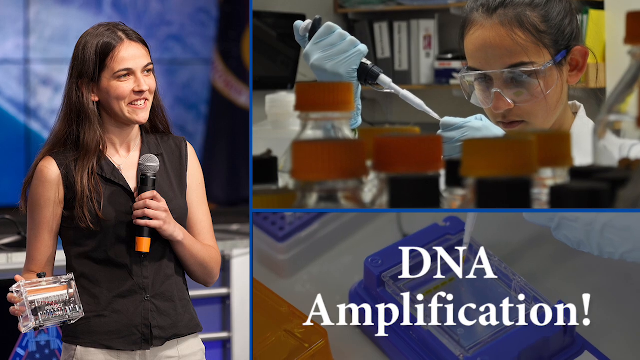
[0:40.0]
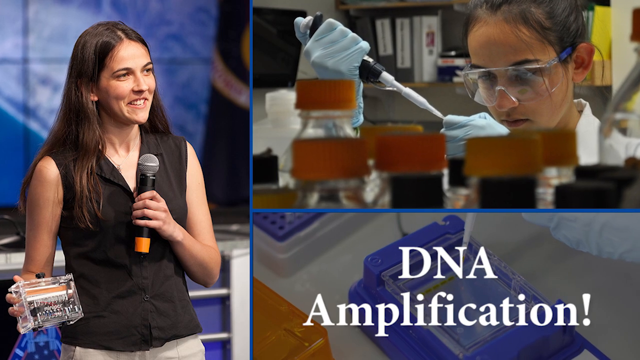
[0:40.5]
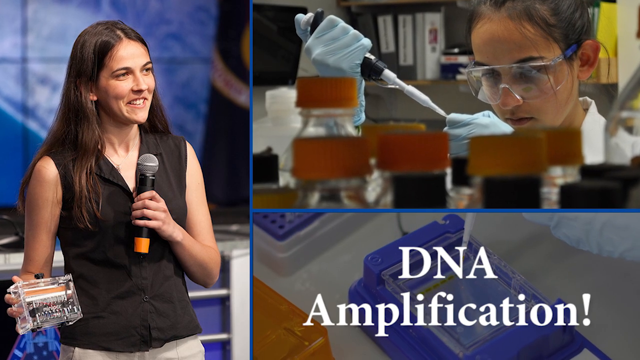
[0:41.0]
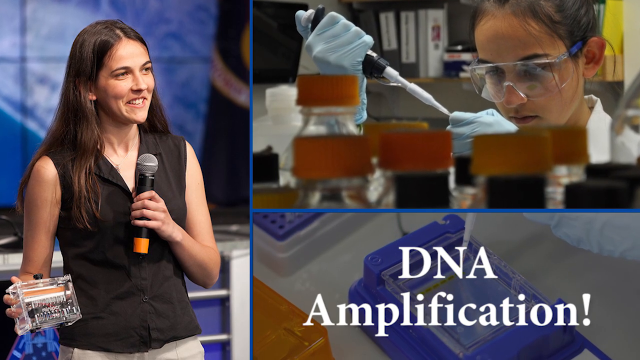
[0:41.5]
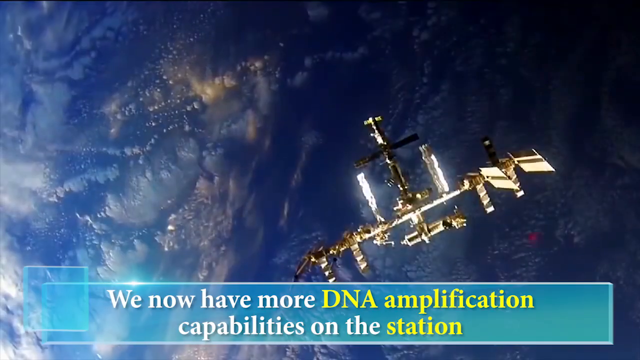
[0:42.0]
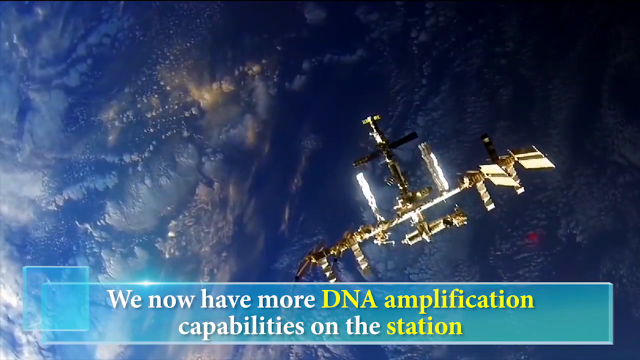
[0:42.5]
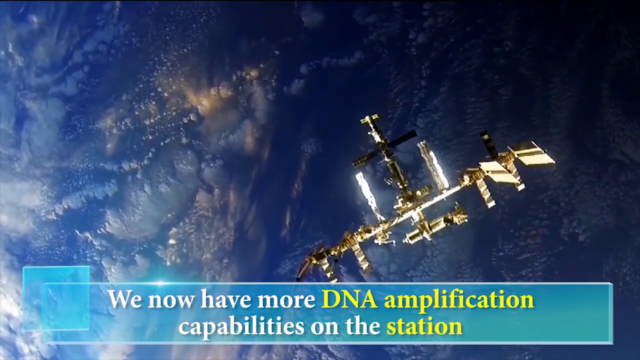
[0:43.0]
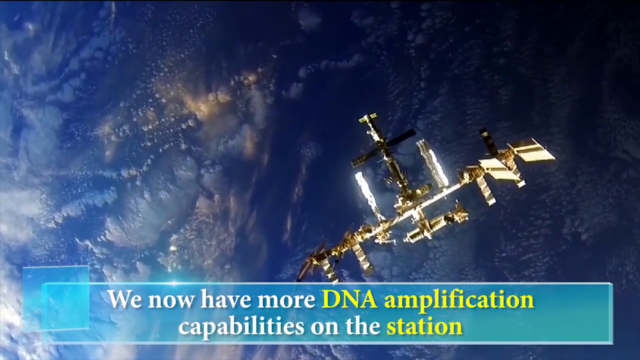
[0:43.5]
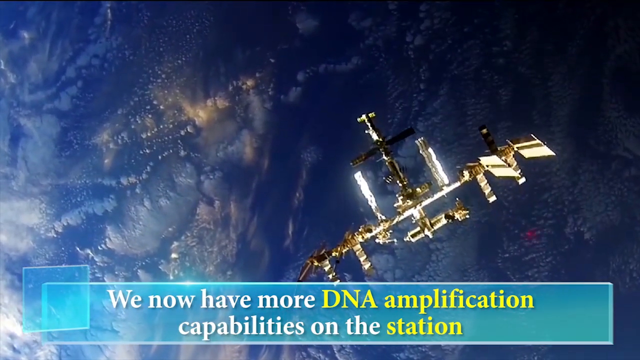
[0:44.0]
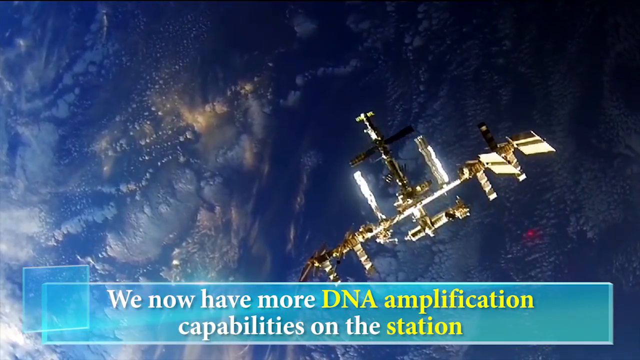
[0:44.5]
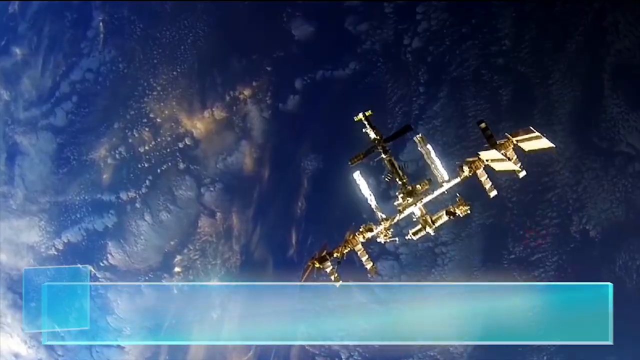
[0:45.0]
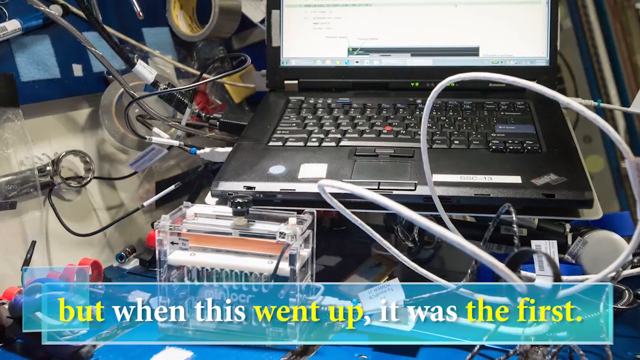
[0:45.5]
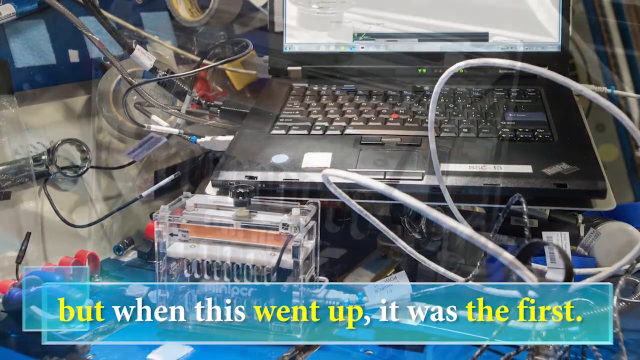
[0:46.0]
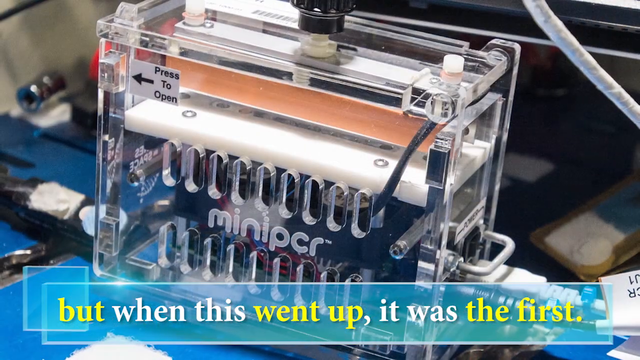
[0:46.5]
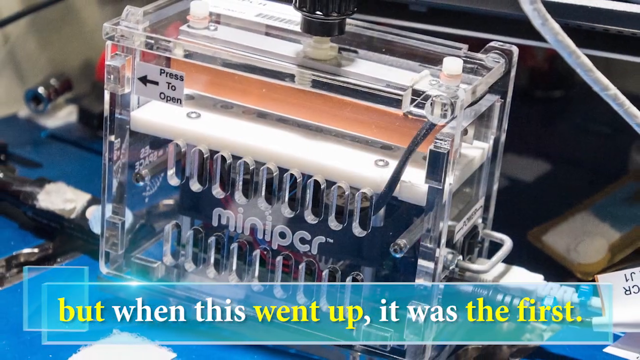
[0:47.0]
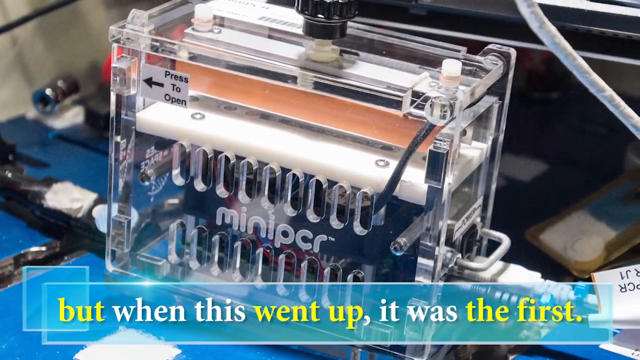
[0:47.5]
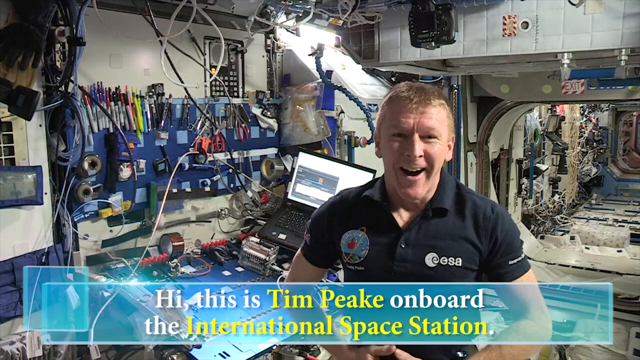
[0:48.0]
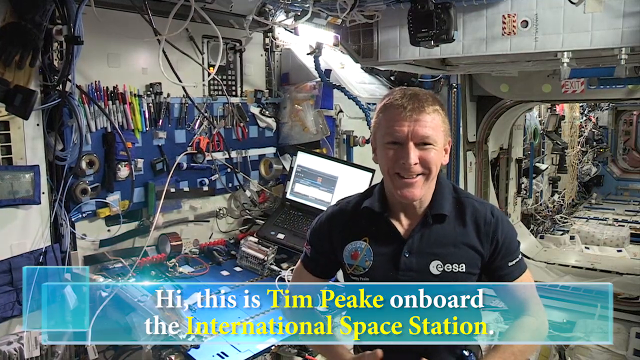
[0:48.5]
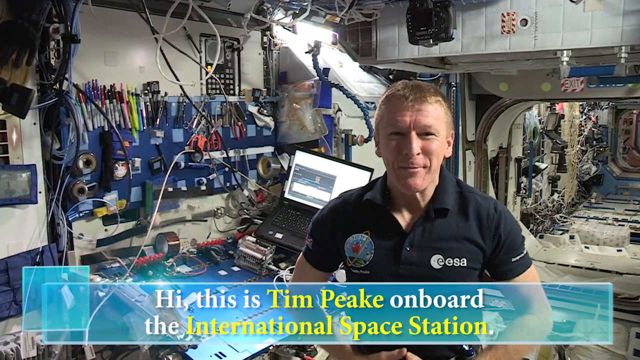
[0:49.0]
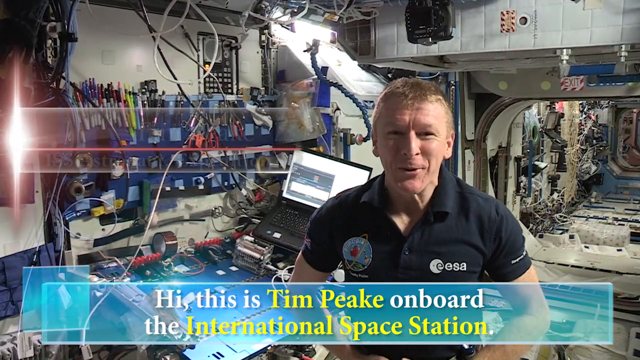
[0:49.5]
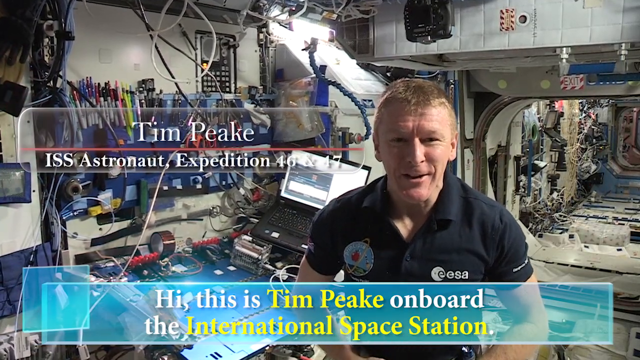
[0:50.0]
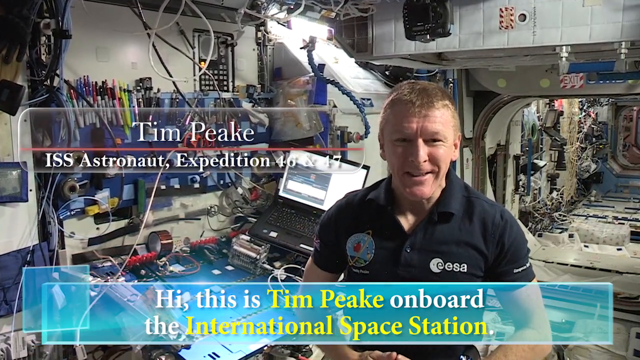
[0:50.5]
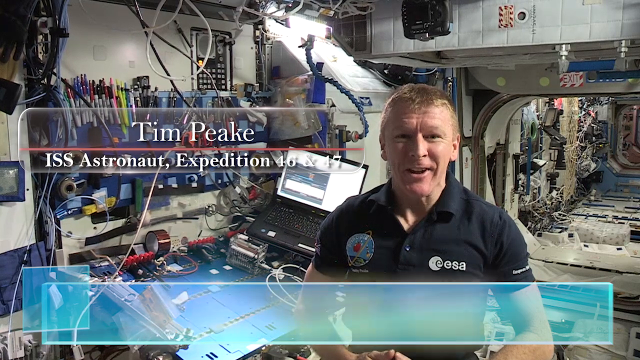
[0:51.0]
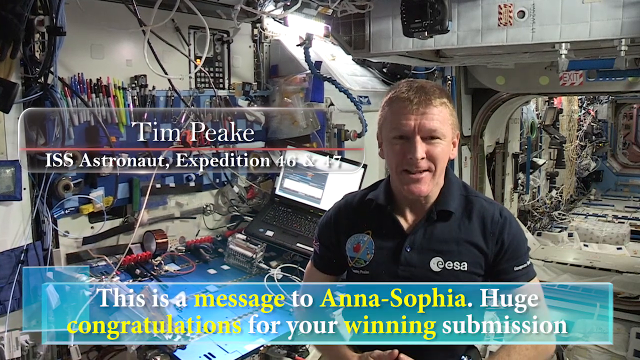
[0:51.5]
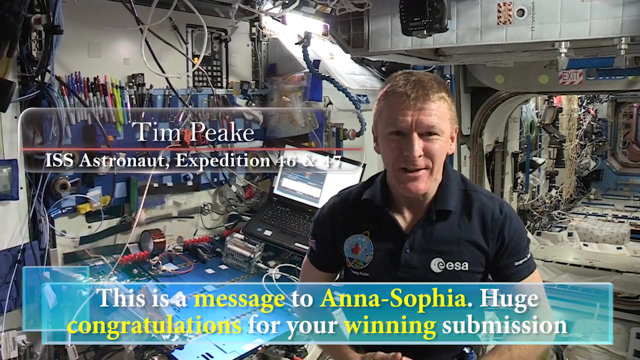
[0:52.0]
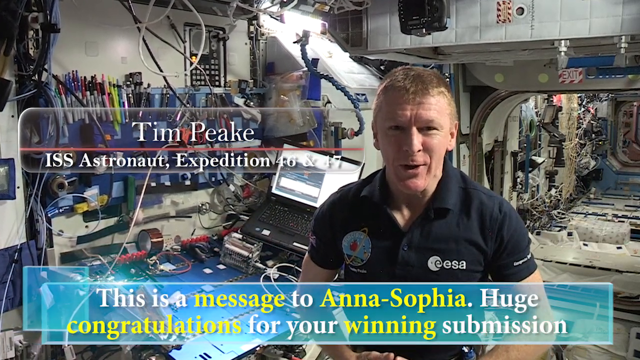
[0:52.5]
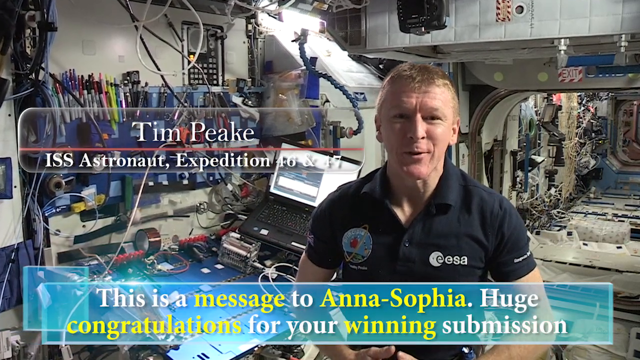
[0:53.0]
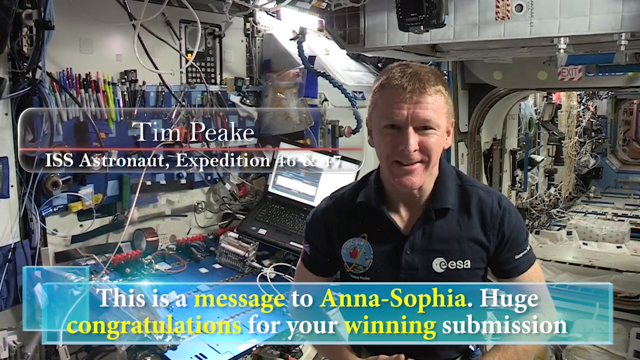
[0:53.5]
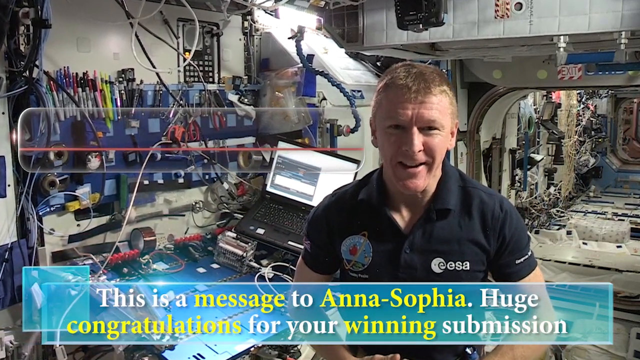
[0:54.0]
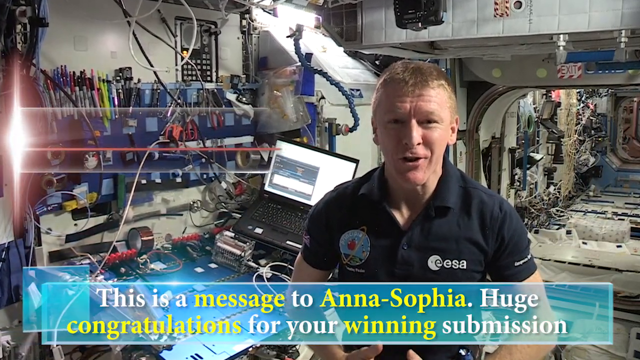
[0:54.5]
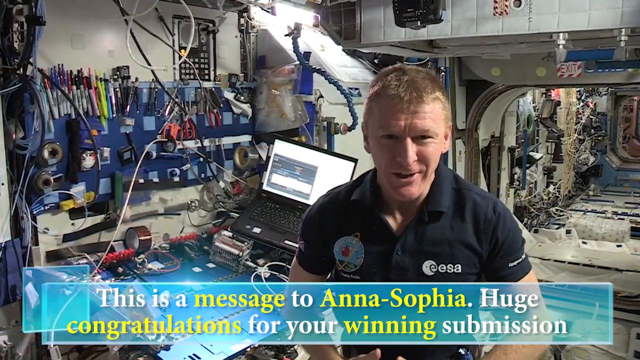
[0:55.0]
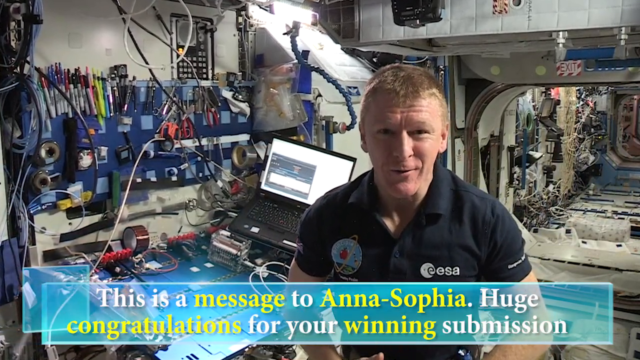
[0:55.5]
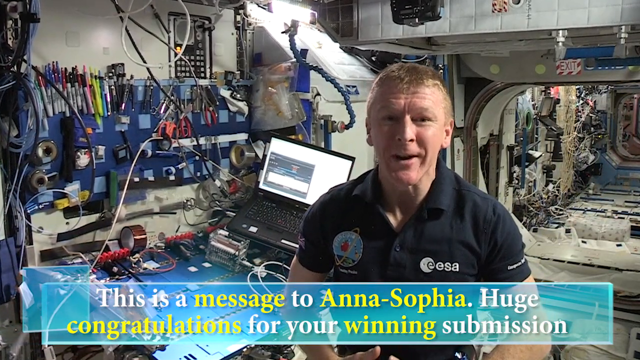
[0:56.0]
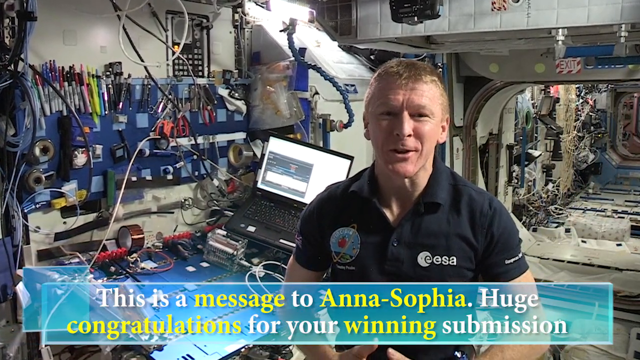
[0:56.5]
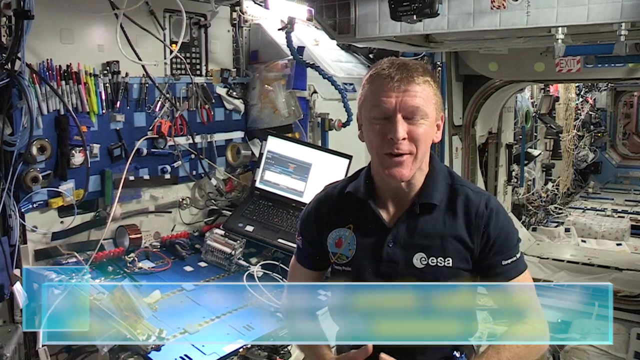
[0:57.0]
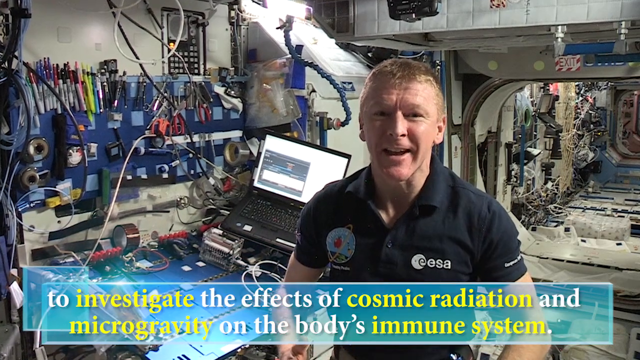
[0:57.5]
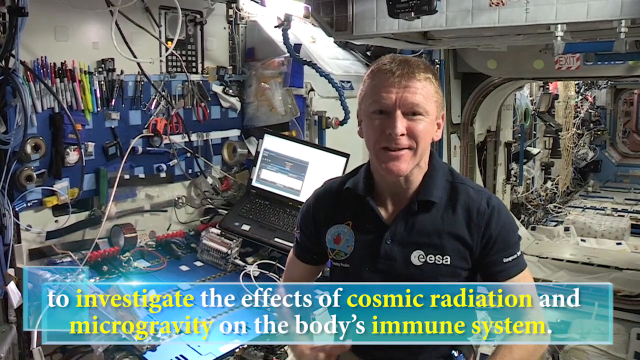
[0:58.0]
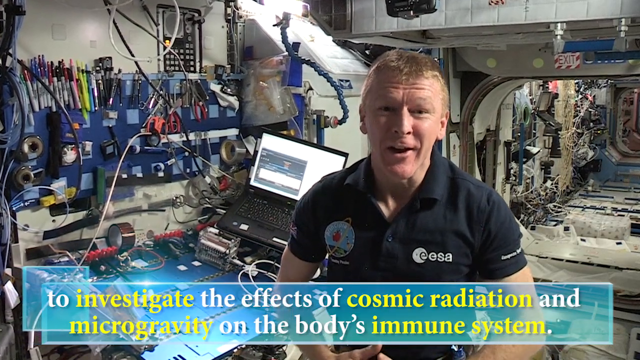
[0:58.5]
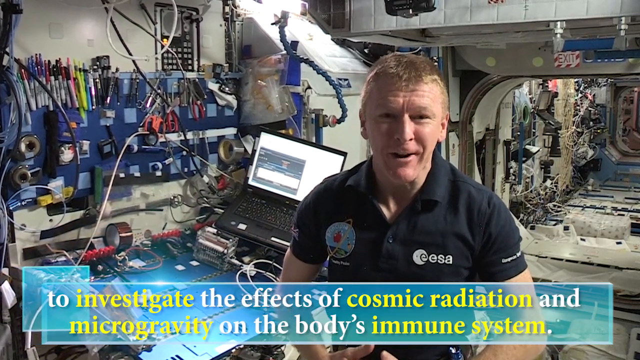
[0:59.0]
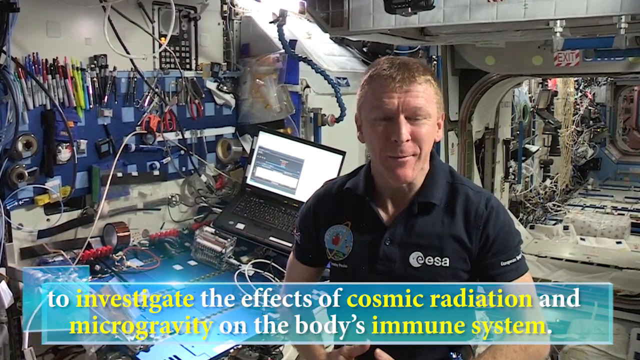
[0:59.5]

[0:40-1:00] A woman with long brown hair in a black shirt holds an object and a microphone in her hands and smiles. Another woman on the right side holds lab equipment, like a vial with little bottles that have orange lids, wears glasses, and is kind of picking at the tip of it; the two are separated by a blue border. Bolded white text reads "DNA amplification," and the camera is kind of zooming in. Then a thing in space moves around, with a blue box at the bottom carrying white and yellow text: "we now have more DNA amplification capabilities on the station but when this went up it was the first." A device called mini PCR appears, with a white sticker bearing black text reading "press to open." A man in a black shirt, who looks like he is from NASA, is shown with a lot of technical equipment in the background and a blue banner with white and yellow text reading "hi this is Tim Peake on board the International Space Station." A banner pops up with his information, reading "Tim Peake ISS Astronaut Expedition 46," followed by more text: "this is a message to Anna Sophia. Huge congratulations for your winning submission!" He looks at the screen and talks, and additional text at the bottom reads "to investigate the effects of cosmic radiation and microgravity on the body's immune system."